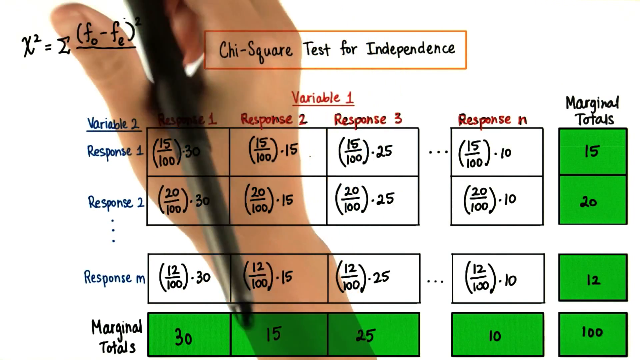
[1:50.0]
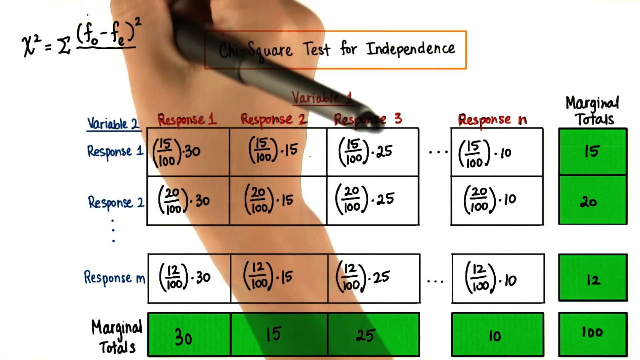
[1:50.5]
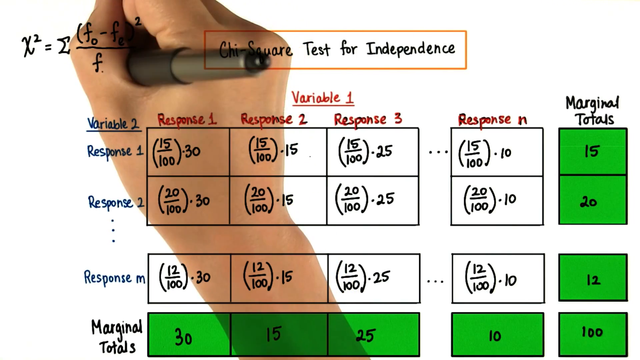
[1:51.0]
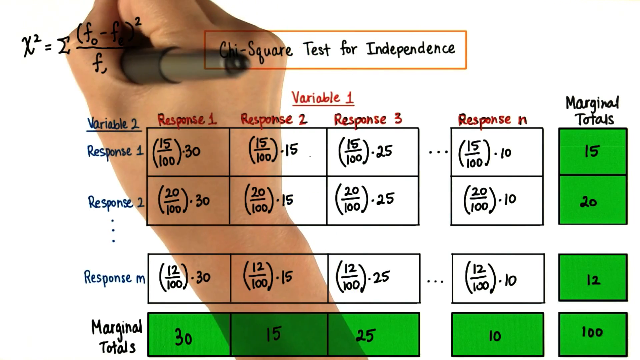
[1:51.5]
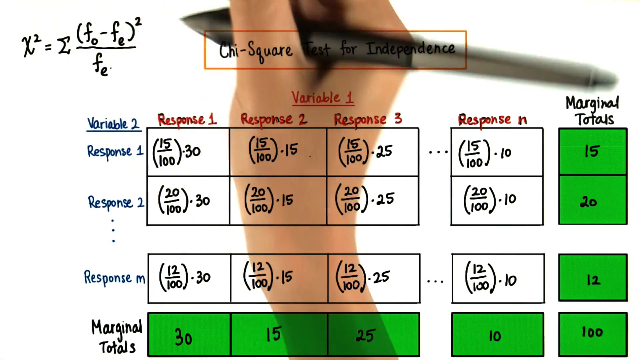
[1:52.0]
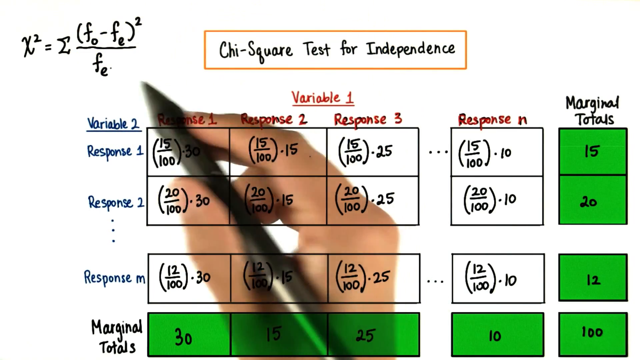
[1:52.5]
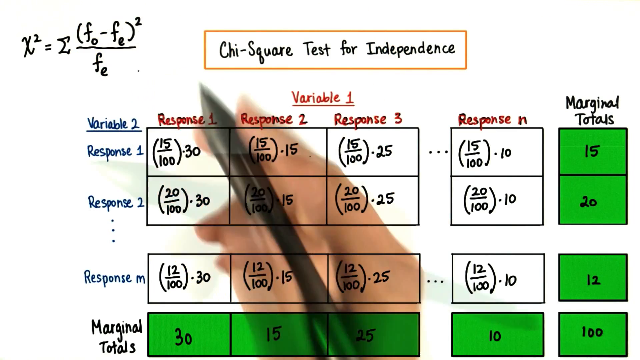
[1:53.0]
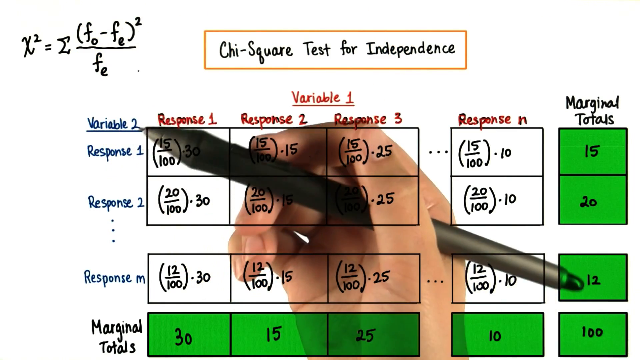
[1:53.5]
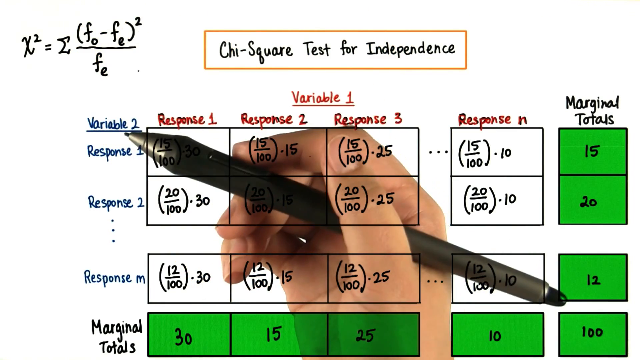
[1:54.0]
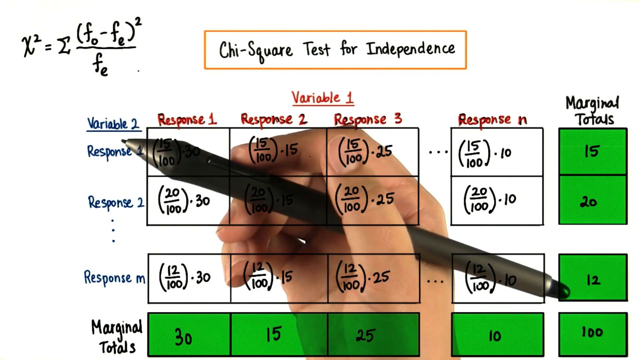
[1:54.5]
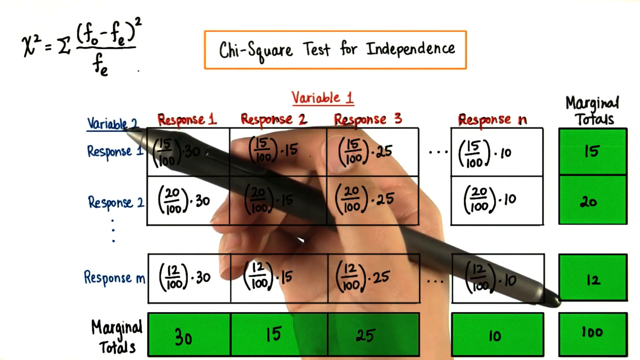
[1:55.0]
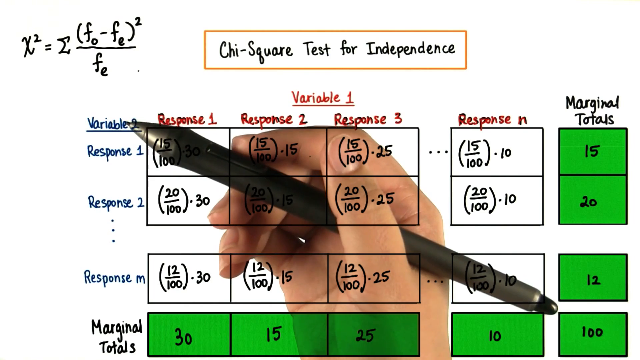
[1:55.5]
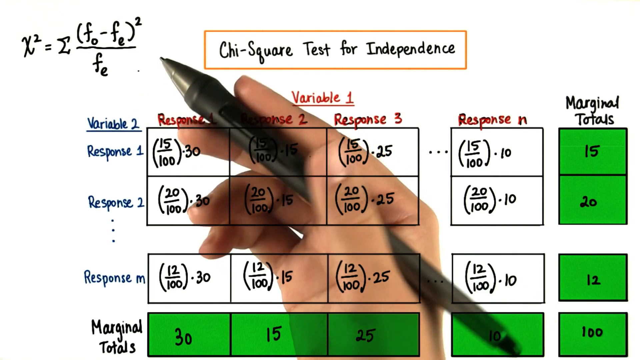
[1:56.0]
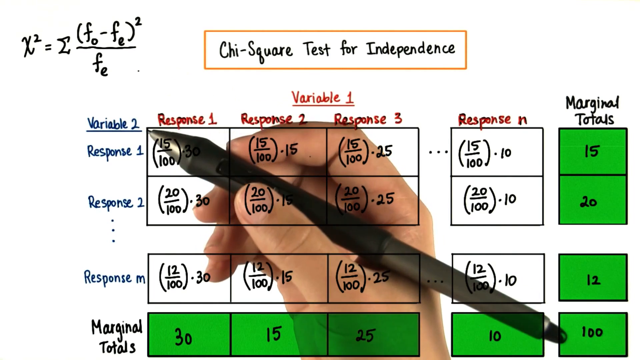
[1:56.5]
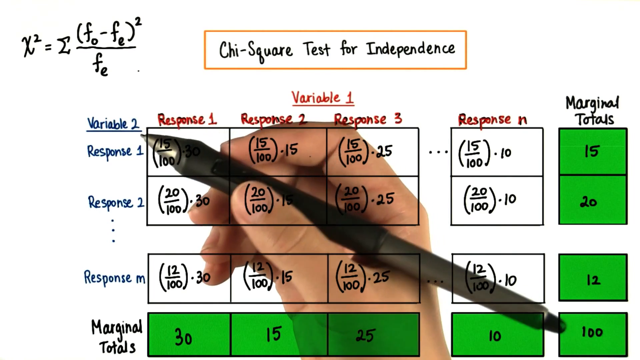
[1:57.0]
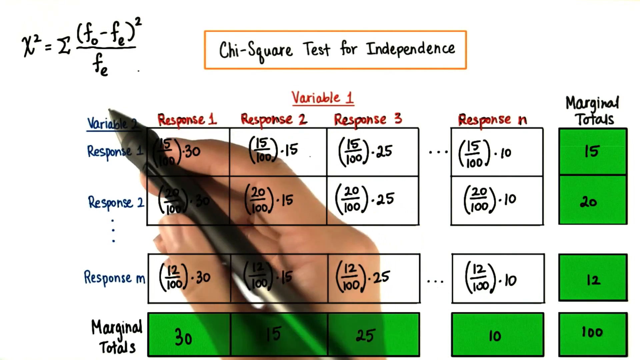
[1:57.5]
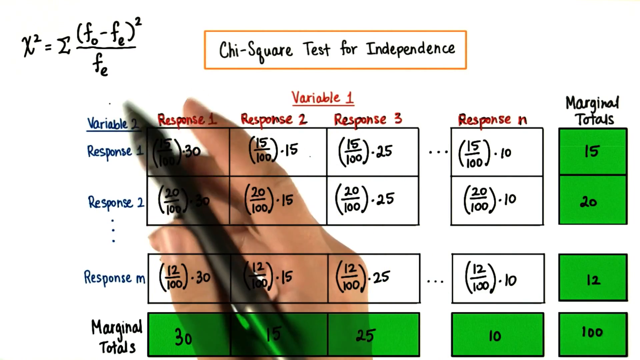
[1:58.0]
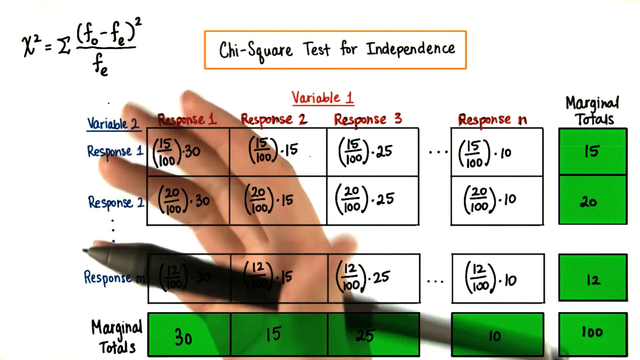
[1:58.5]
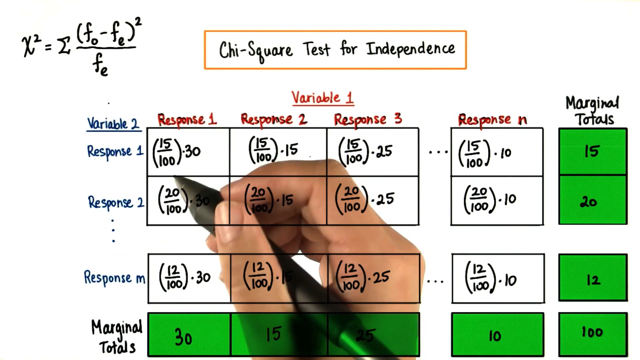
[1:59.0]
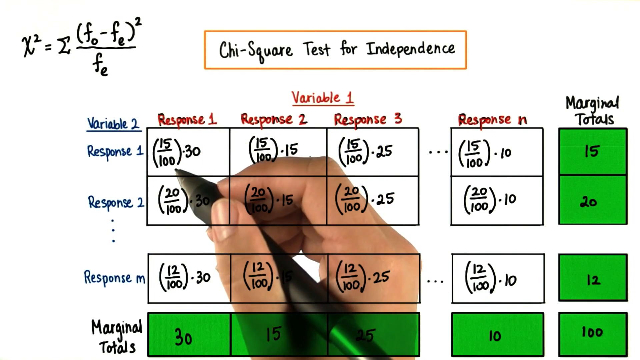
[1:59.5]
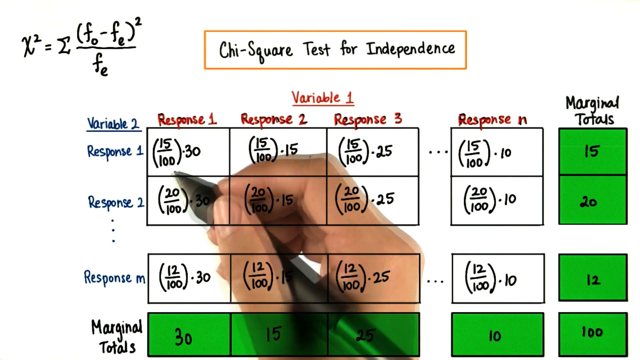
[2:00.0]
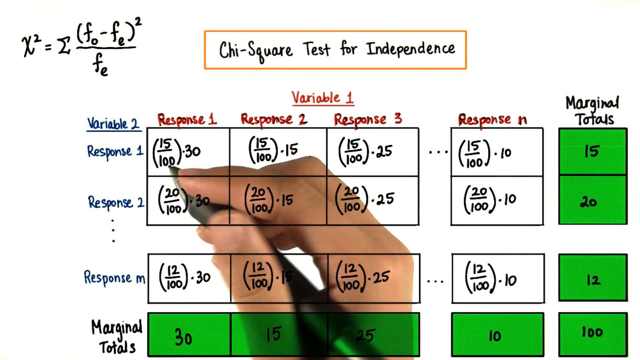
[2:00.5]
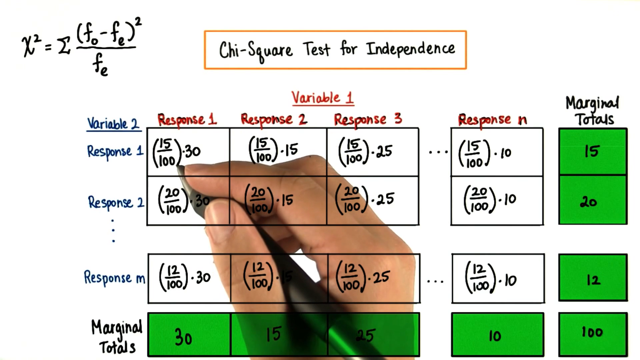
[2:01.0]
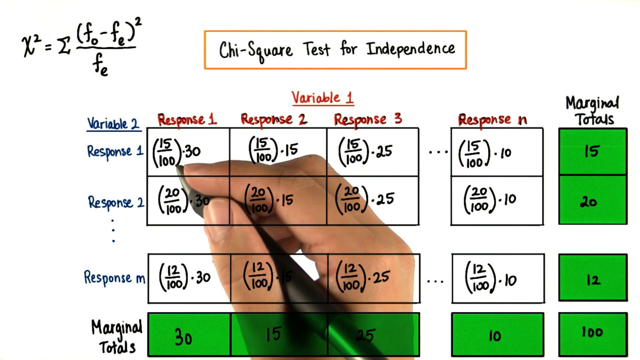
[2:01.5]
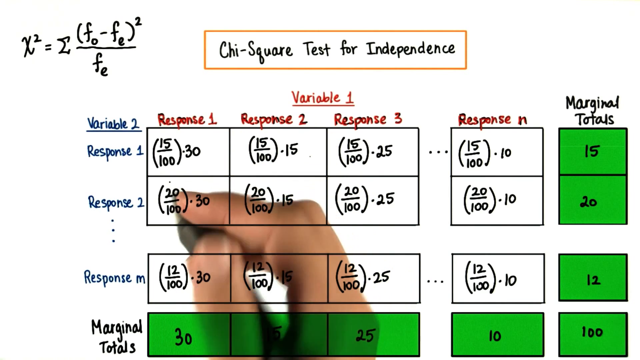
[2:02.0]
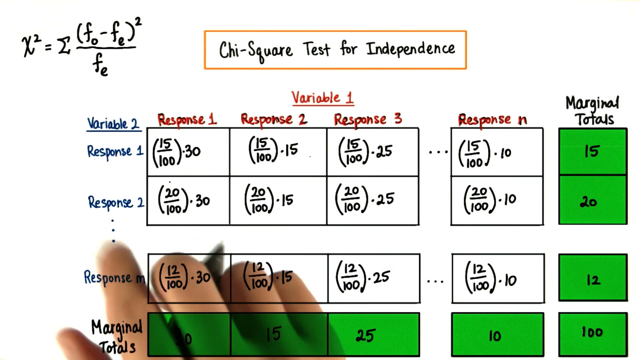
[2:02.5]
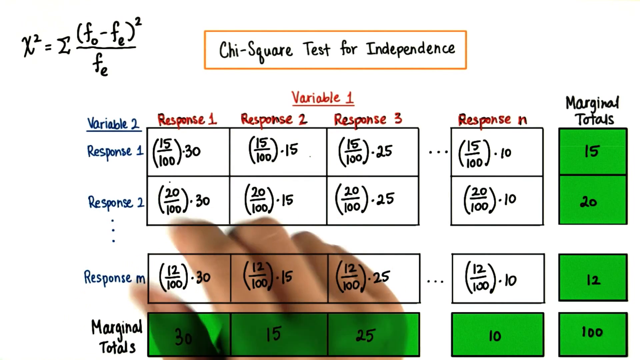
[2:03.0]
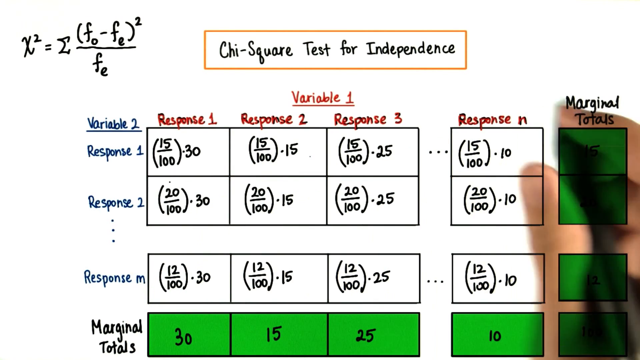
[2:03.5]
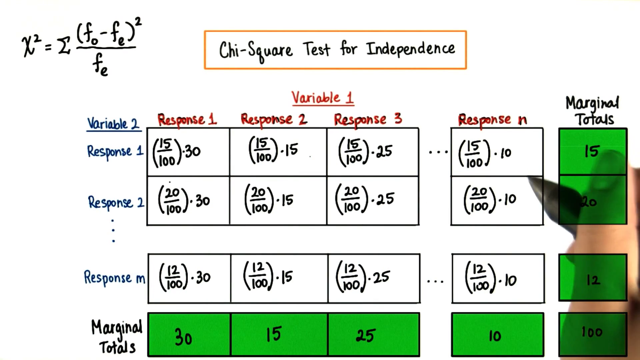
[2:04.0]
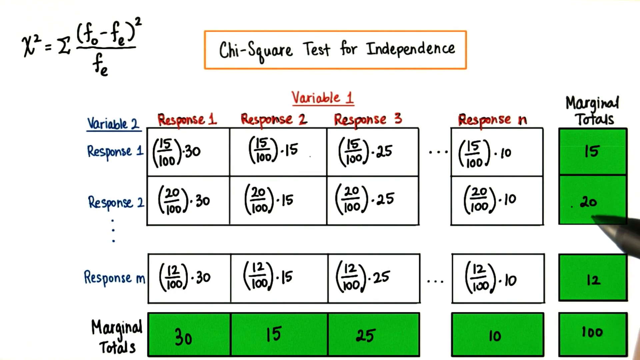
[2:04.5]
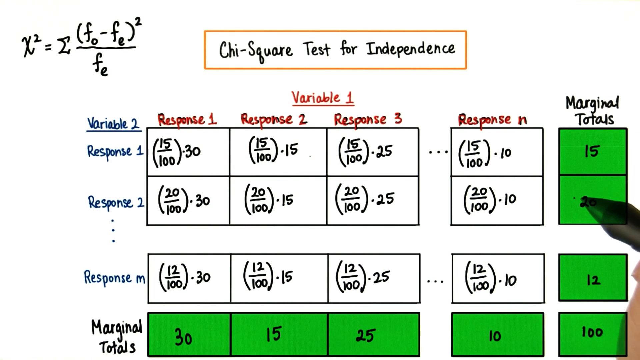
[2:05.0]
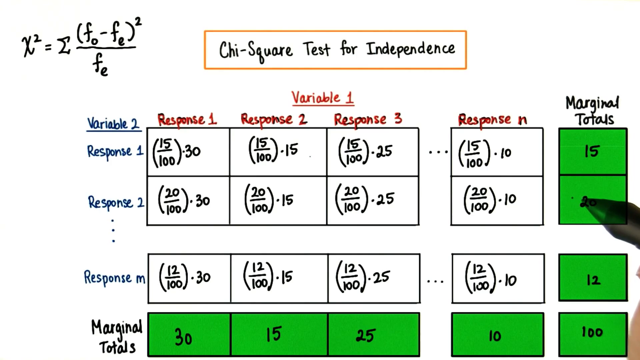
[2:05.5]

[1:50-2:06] The person continues writing on the board and filling in the tables. The previous equation is written divided by fe. They continue pointing out things in the table and look as if they are about to write something in the marginal totals for the response 2 row, but the video ends before this is shown.